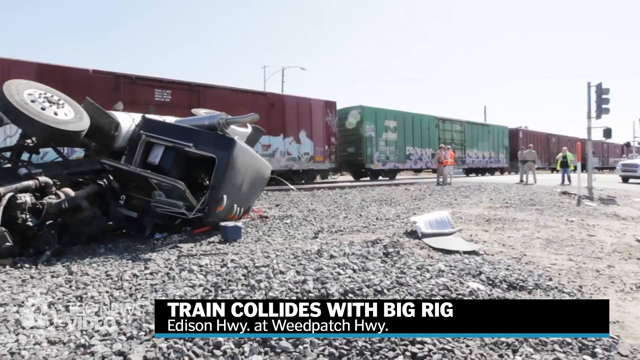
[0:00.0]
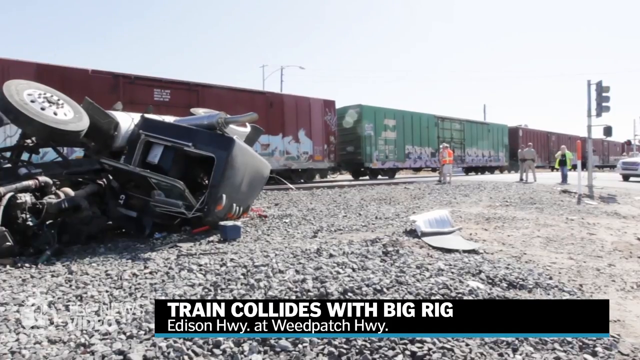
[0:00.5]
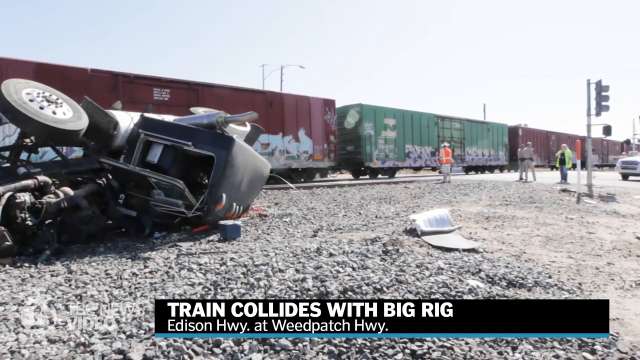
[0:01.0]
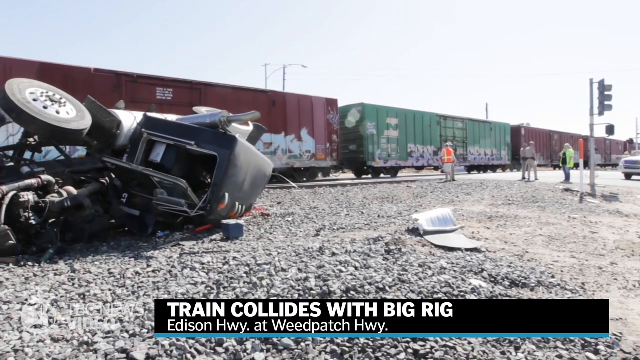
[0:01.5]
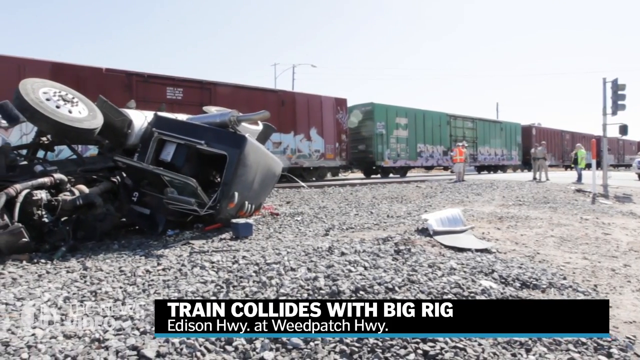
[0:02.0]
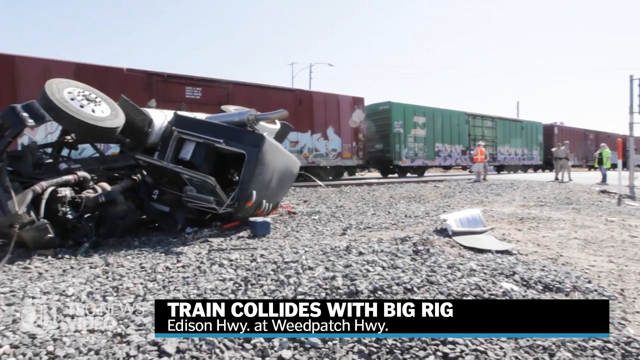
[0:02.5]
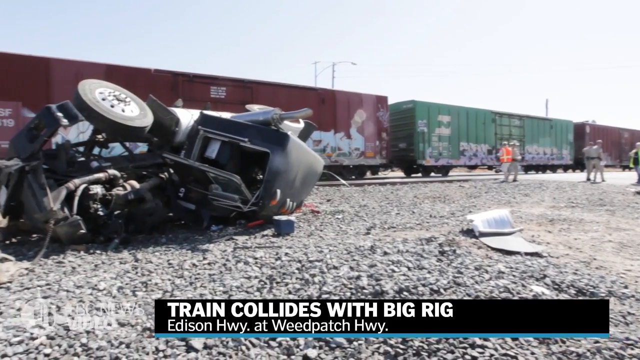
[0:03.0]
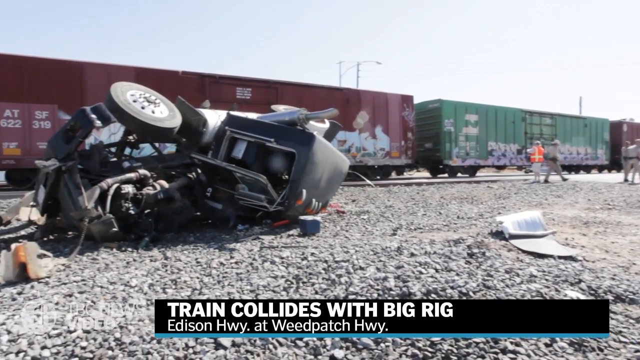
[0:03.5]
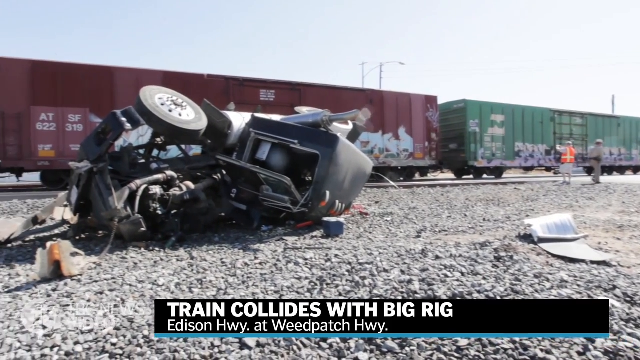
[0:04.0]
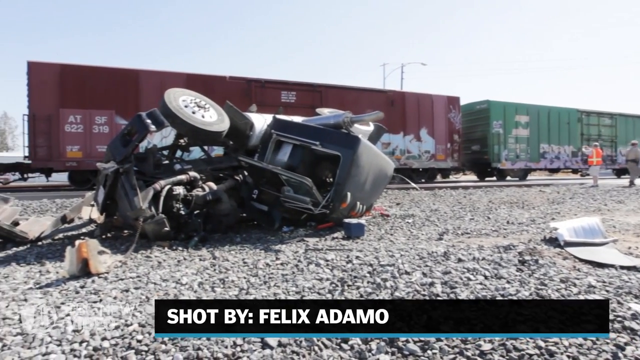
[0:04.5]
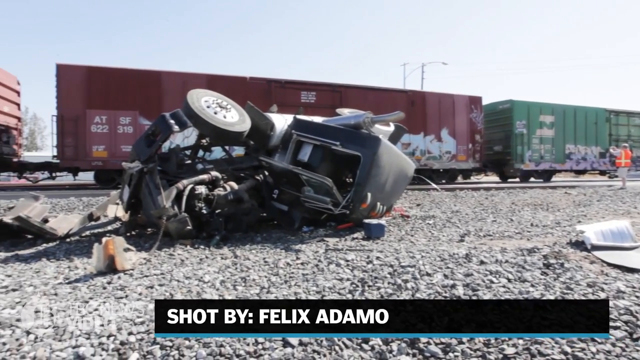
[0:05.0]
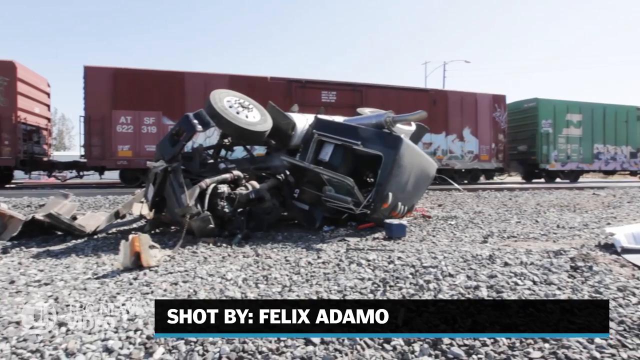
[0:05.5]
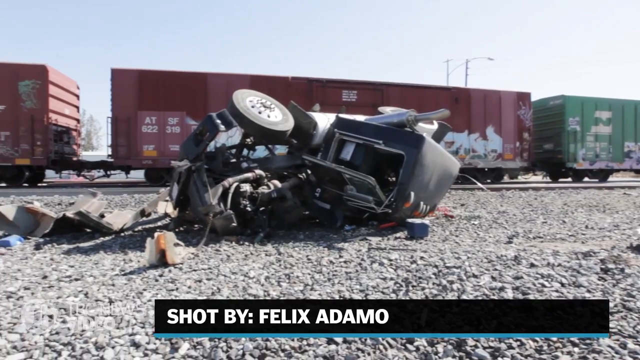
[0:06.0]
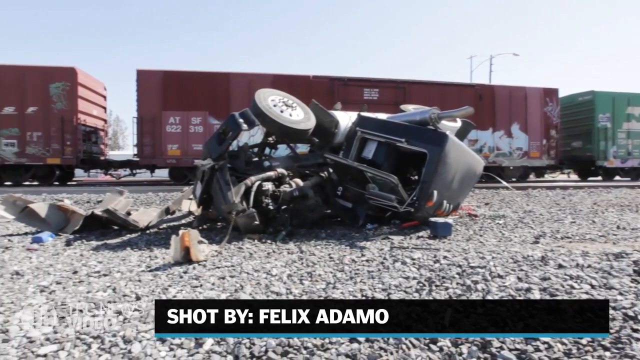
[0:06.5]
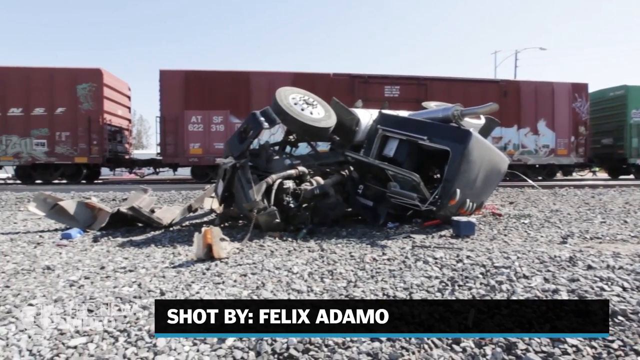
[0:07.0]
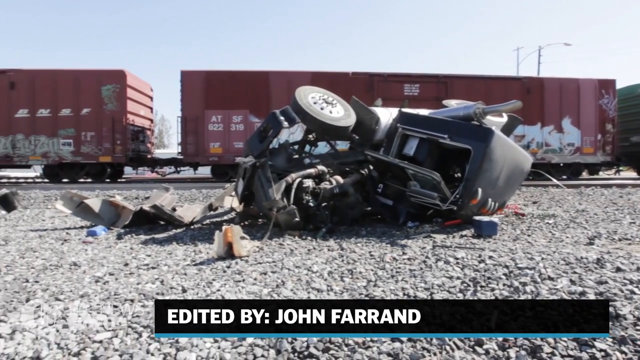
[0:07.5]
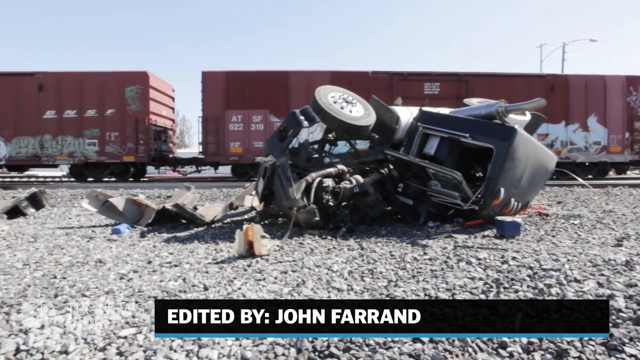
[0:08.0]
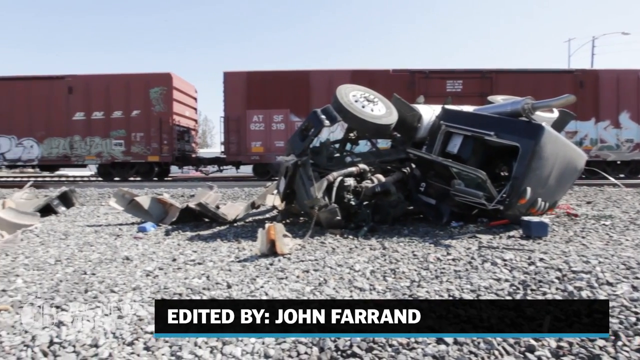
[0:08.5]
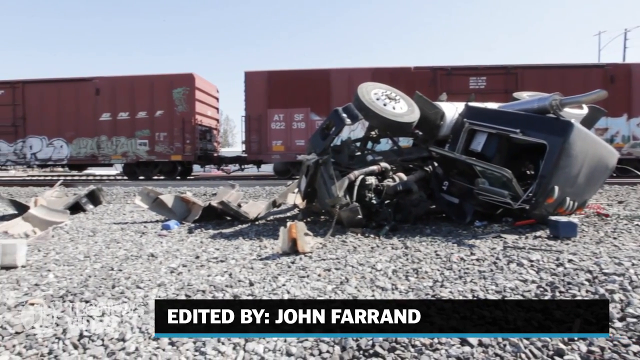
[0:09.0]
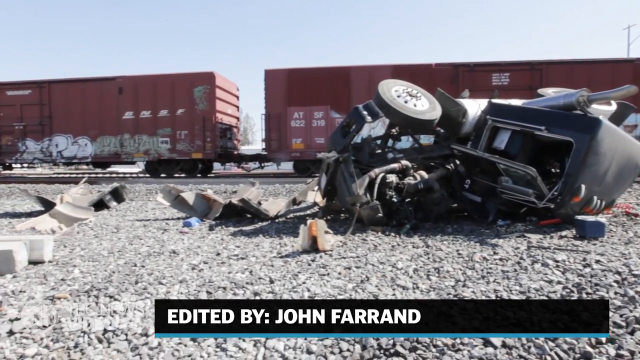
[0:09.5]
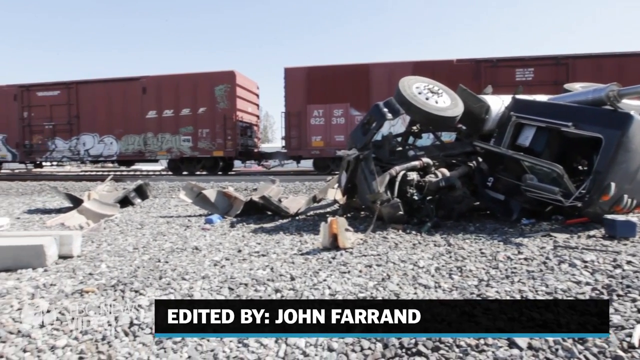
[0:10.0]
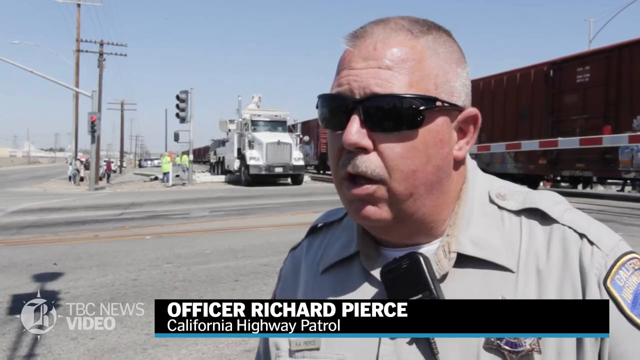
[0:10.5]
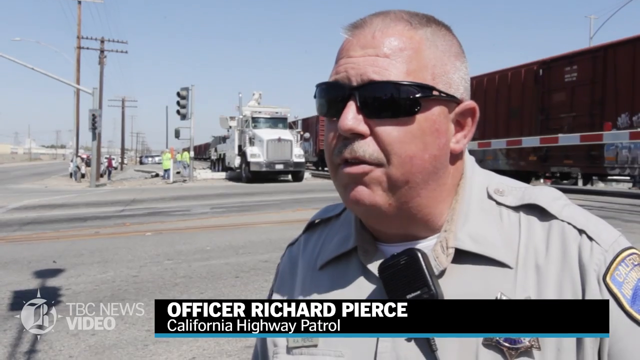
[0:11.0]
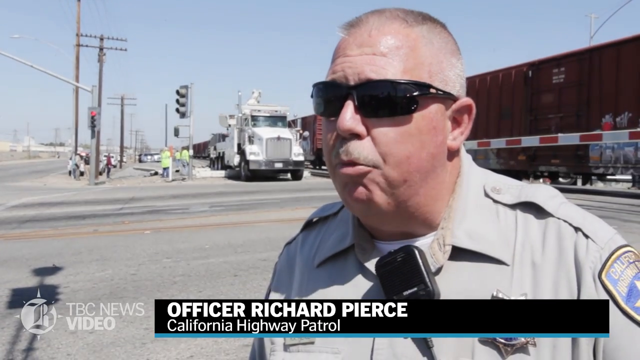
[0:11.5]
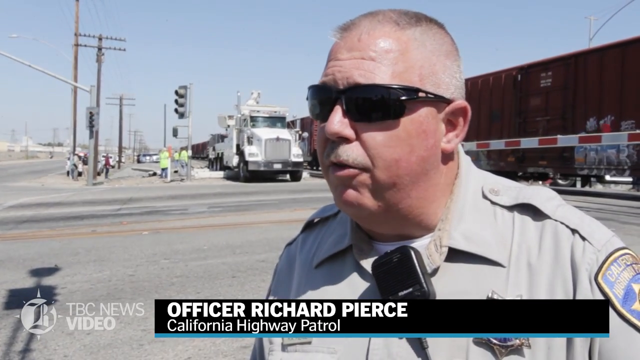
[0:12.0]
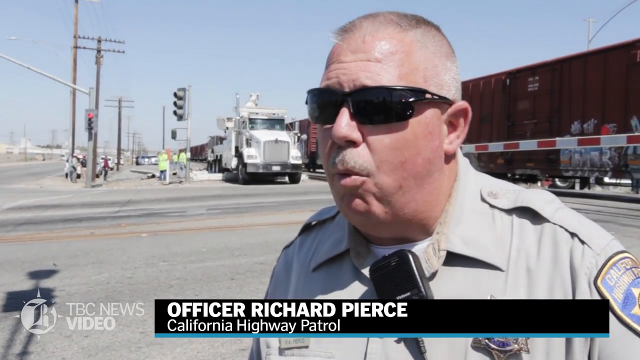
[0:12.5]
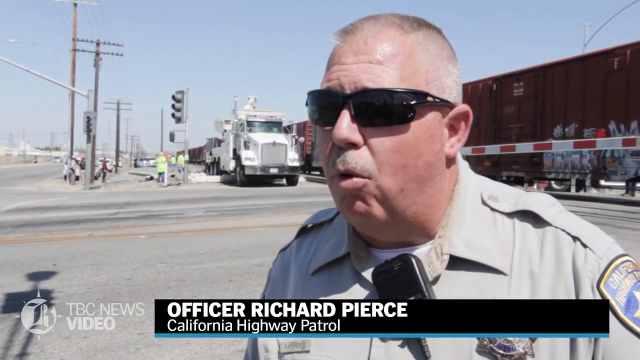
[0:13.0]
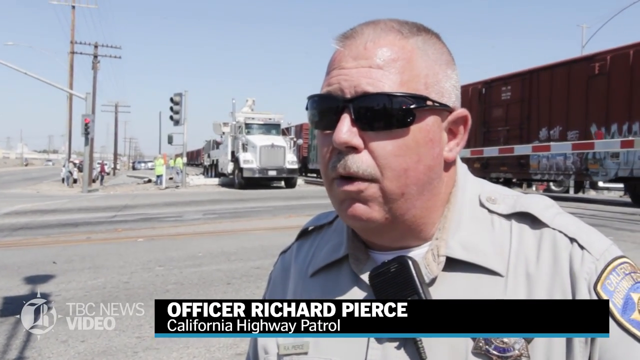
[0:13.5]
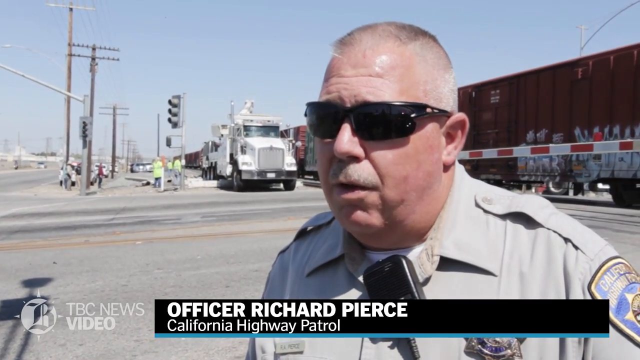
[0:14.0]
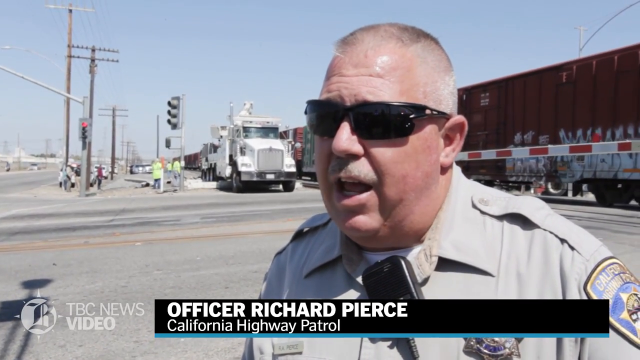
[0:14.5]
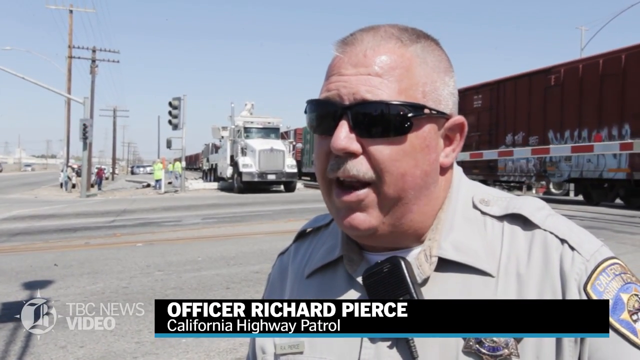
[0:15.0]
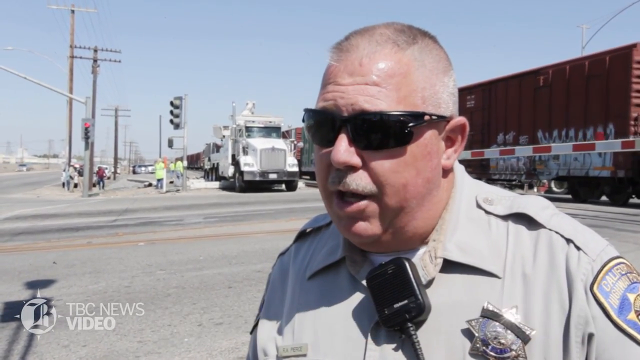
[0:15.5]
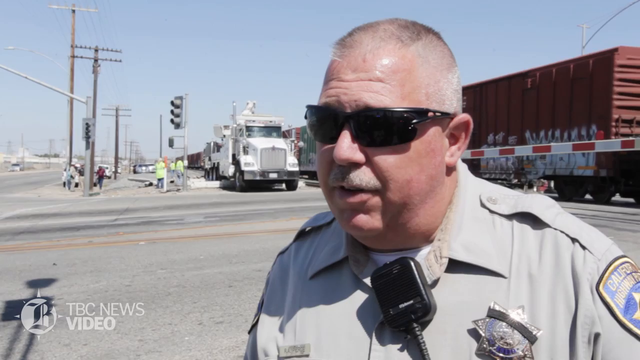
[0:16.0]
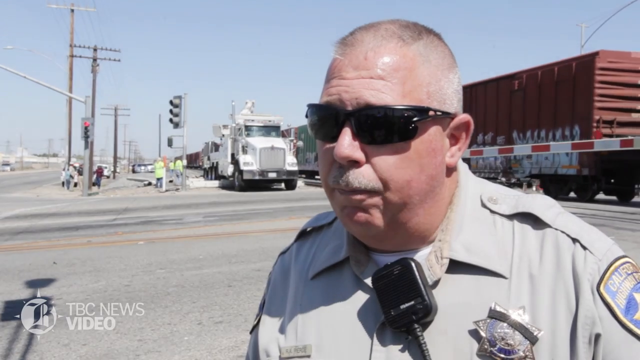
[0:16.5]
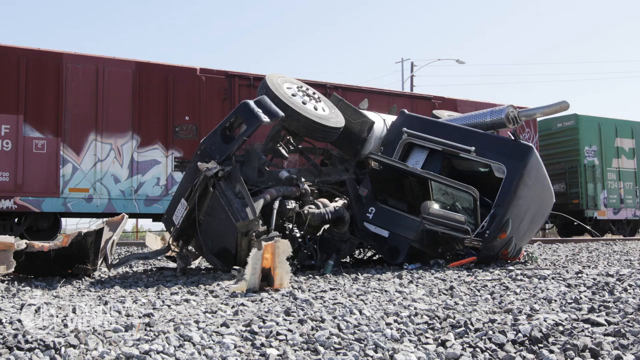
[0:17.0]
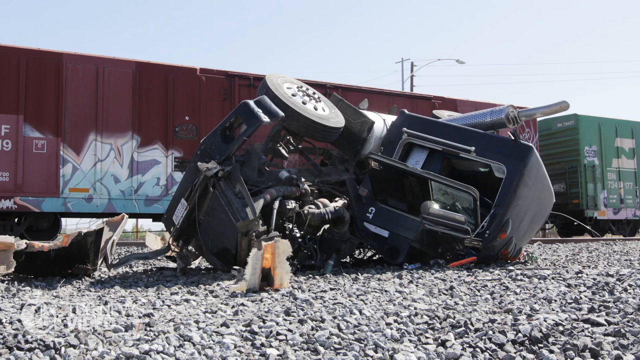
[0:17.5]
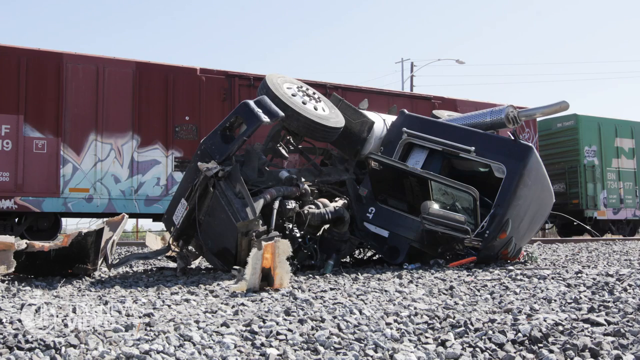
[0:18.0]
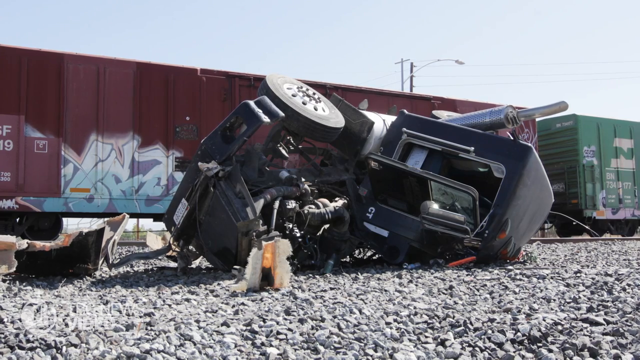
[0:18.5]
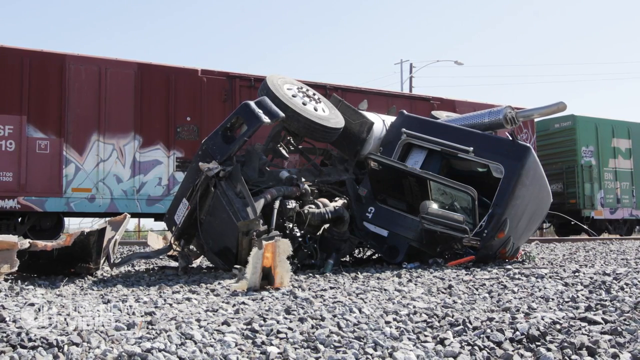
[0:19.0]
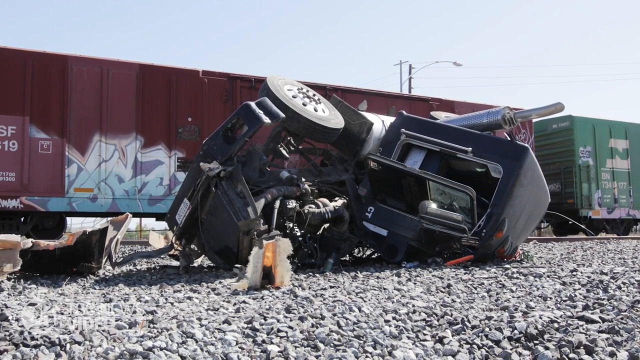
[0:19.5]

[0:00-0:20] A train with blocks, including a maroon and green box, is seen, and a truck is there. Credits name Felix Ferrand as the shooter and John Ferrand as the editor, and another credit names Felix Adamu. Officer Richard Pierce of the California Highway Patrol is giving people an update. The truck is seen wrecked, and emergency personnel on site are assisting; their clothes show that some are police officers, some are ambulance staff and some are engineers inspecting the situation. The road at the crossing is near where other cars are passing by, and there are robots showing that cars are allowed to pass on the other side. There is also a reference to www.fema.gov for more information.